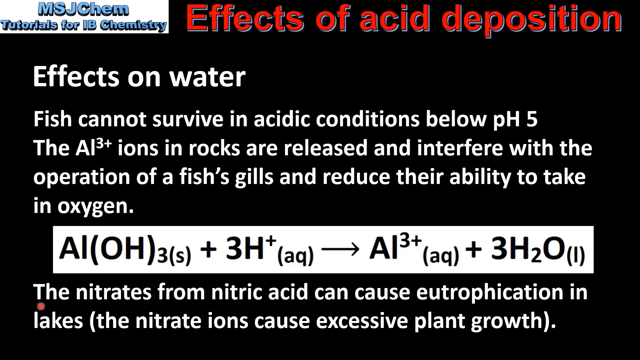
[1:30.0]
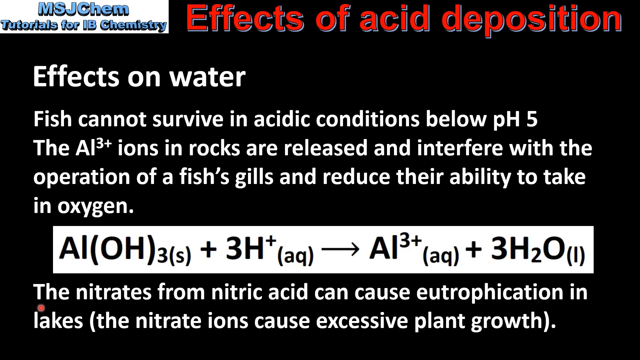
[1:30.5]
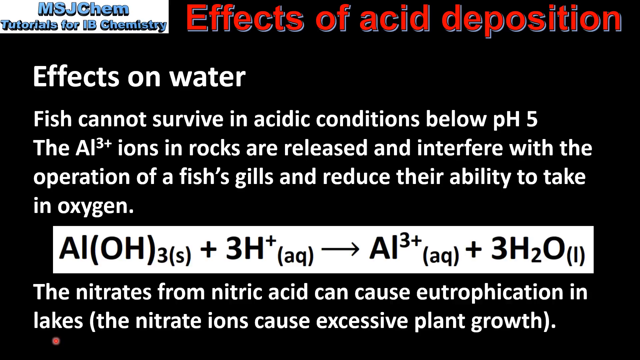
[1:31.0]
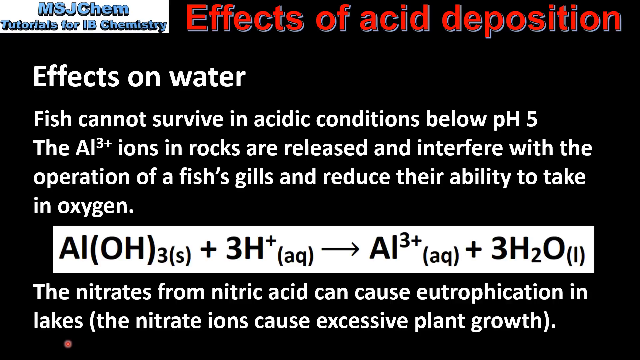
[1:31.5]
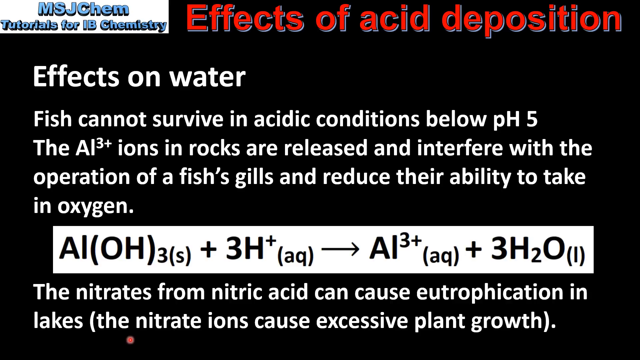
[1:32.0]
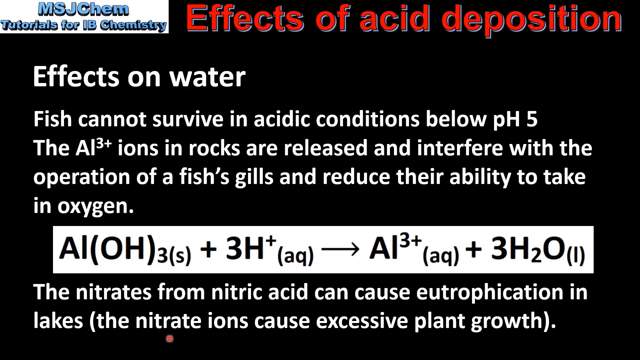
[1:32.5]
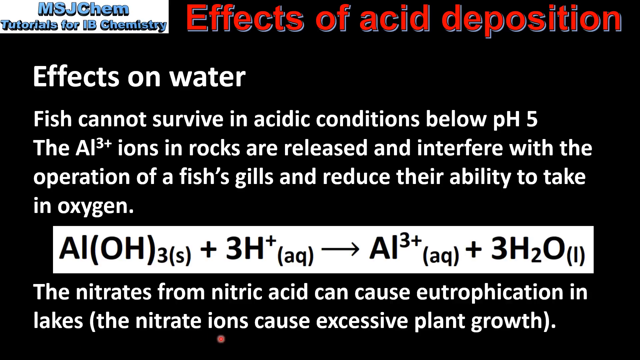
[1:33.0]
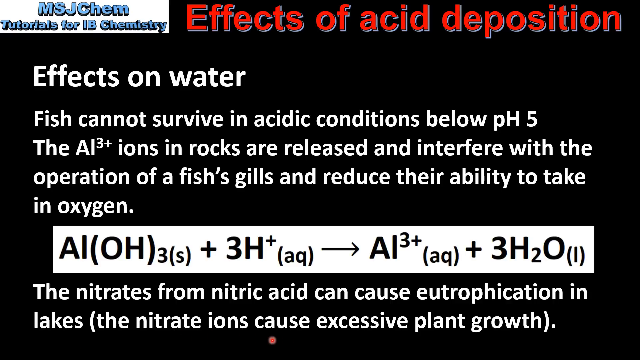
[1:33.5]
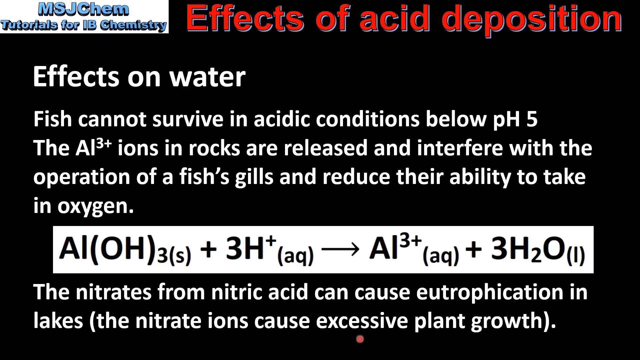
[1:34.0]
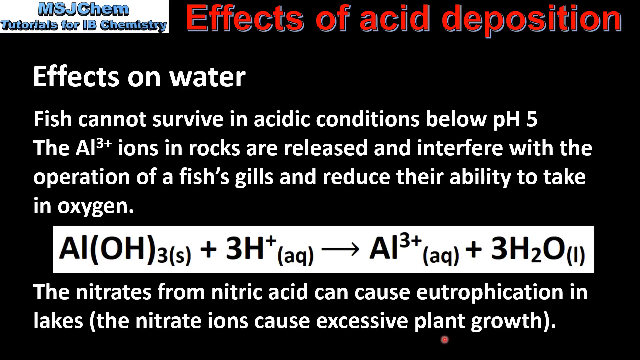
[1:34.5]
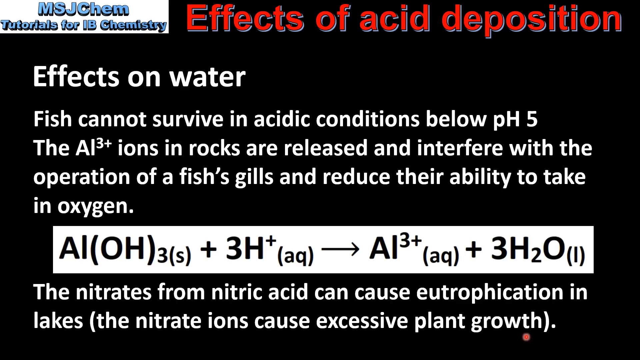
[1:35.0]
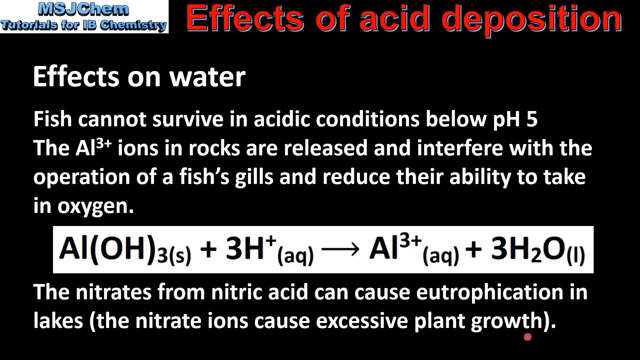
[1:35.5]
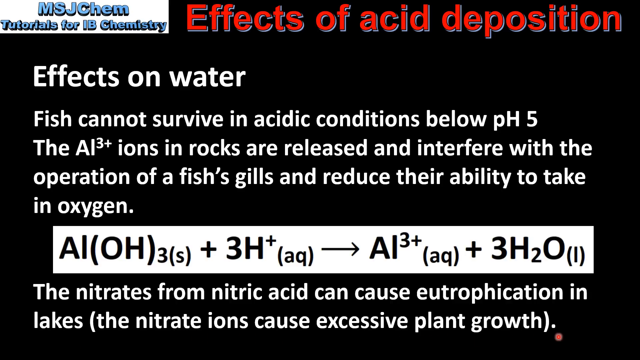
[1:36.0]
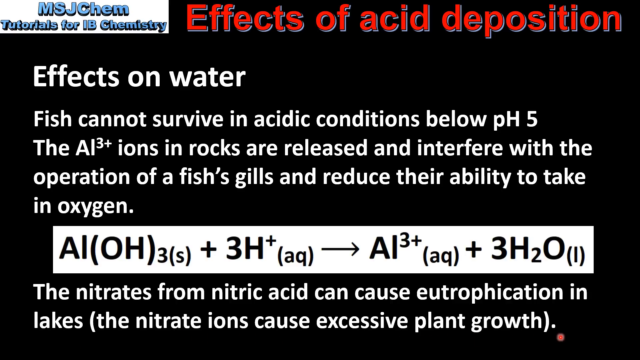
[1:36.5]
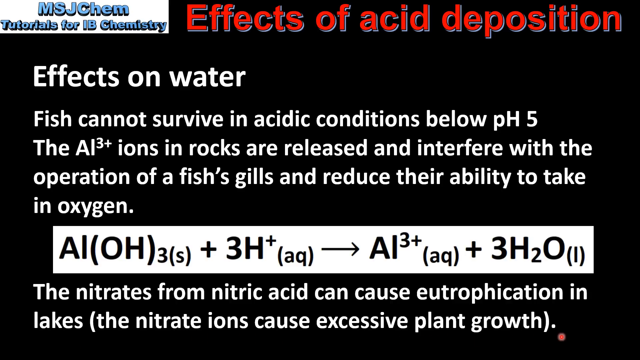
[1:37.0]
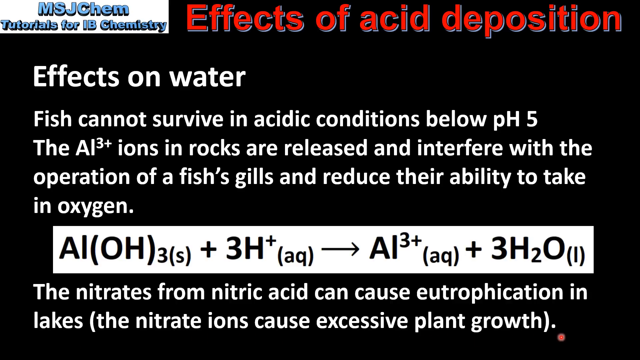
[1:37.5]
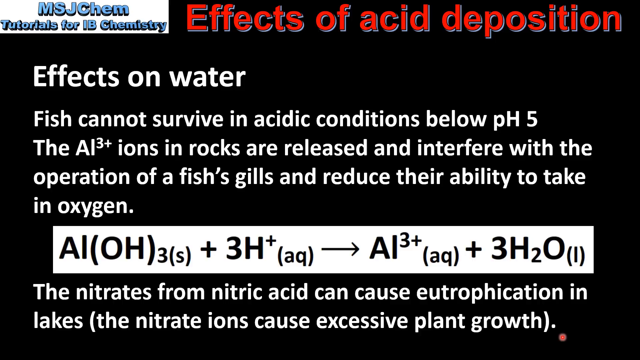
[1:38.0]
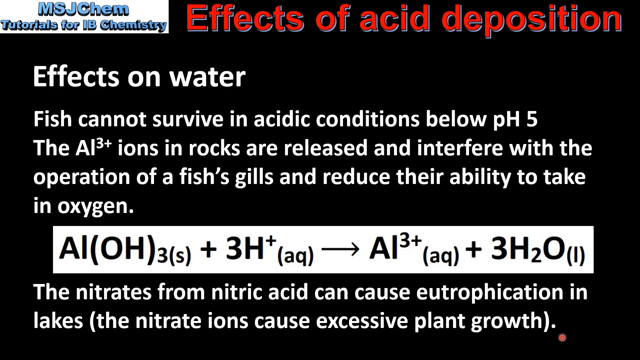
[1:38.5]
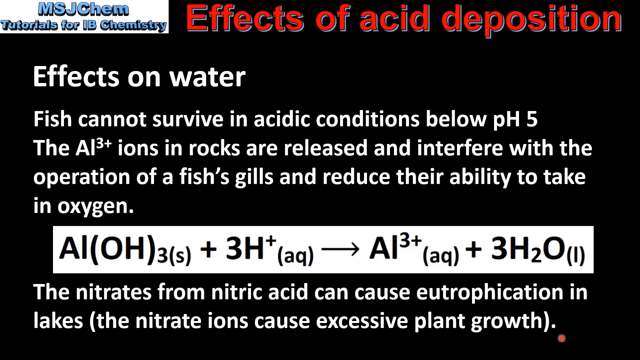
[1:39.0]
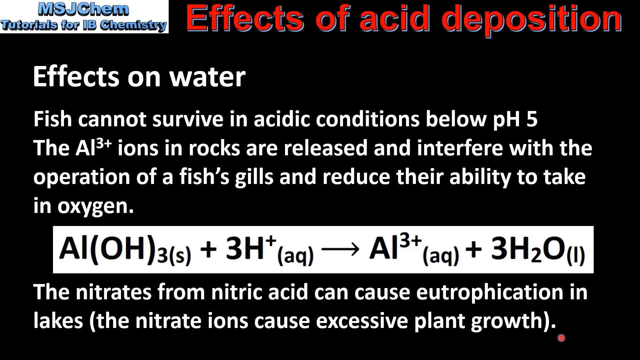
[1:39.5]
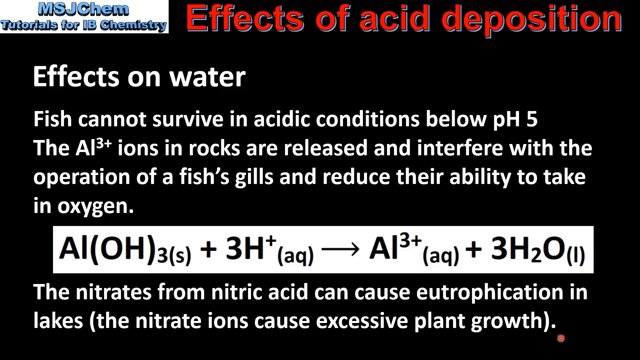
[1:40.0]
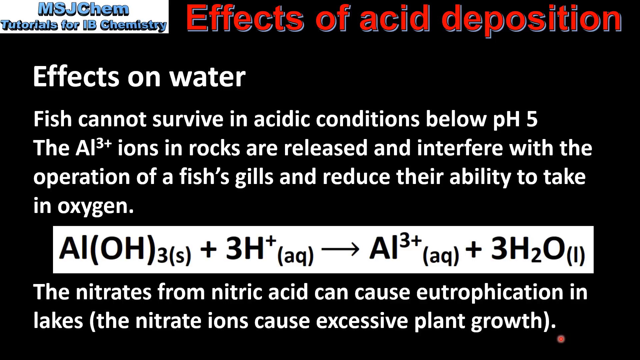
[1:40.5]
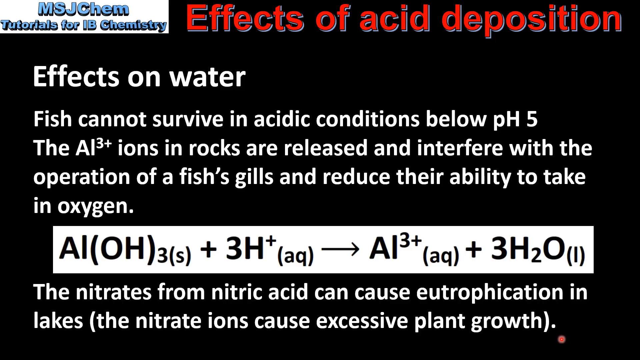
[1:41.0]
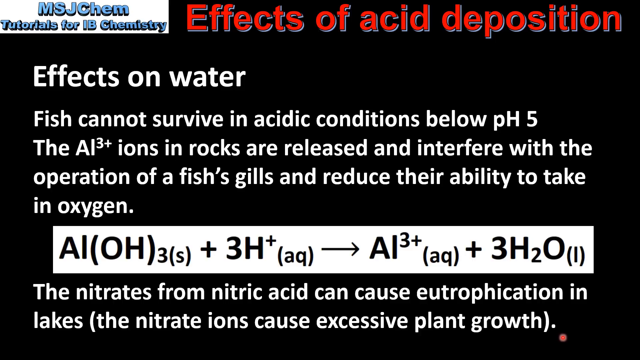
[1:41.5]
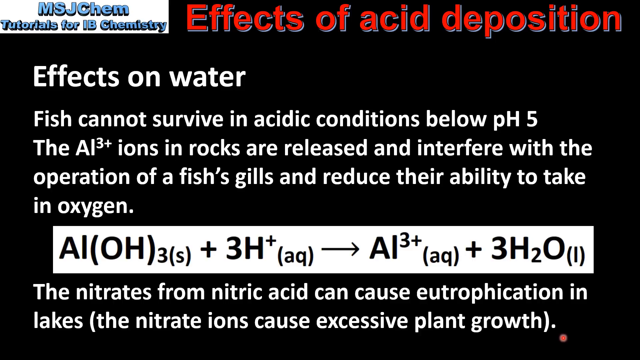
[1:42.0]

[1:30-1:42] The effects on water slide reads "fish cannot survive in acidic conditions below pH 5. The AI3+ ions in rocks are released and interfere with the operation of a fish's gills and reduce their ability to take in water," followed by a large, long chemical formula. The bottom point reads "the nitrates from nitric acid can cause eutrophication in lakes. The nitrate ions cause excessive plant growth." The presenter moves his cursor along the chemical formula and the points at the bottom as if reading along with the slide.